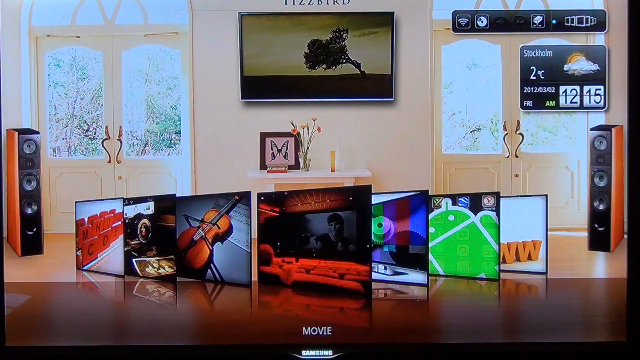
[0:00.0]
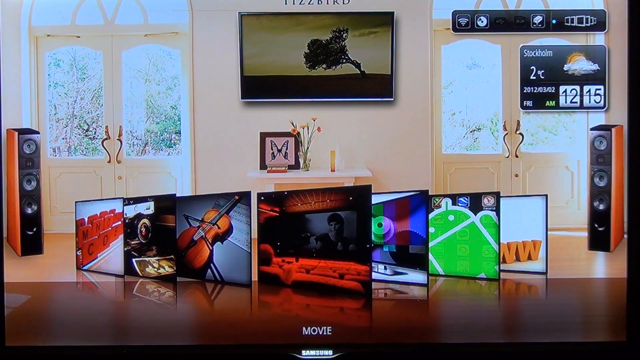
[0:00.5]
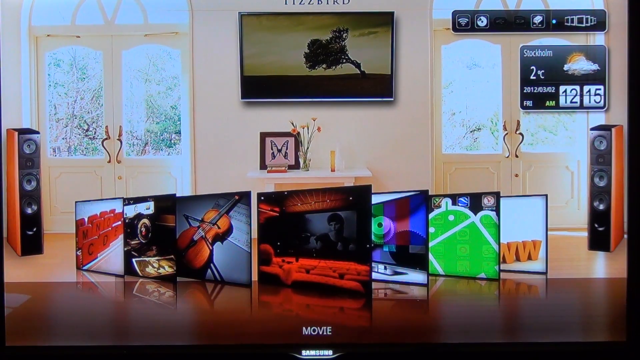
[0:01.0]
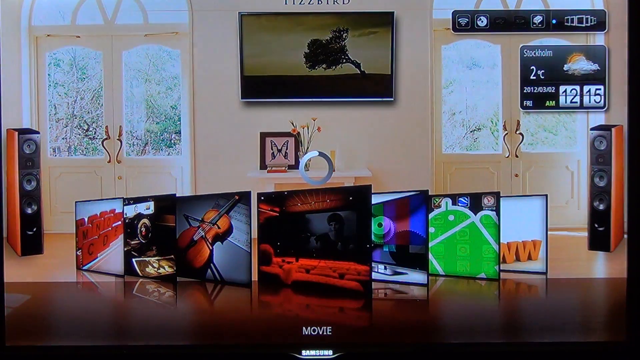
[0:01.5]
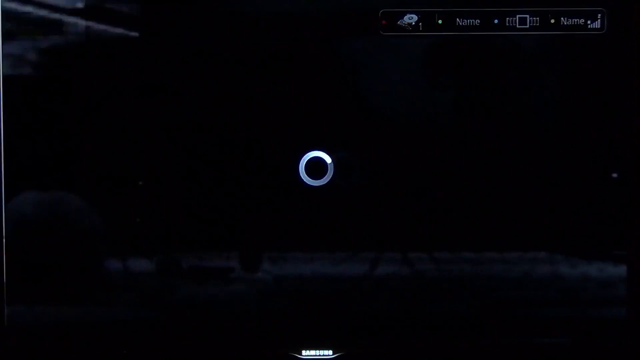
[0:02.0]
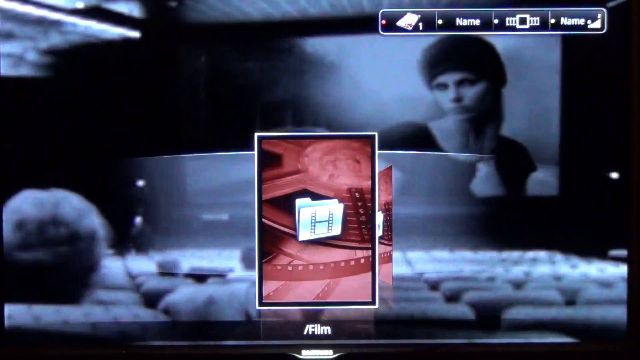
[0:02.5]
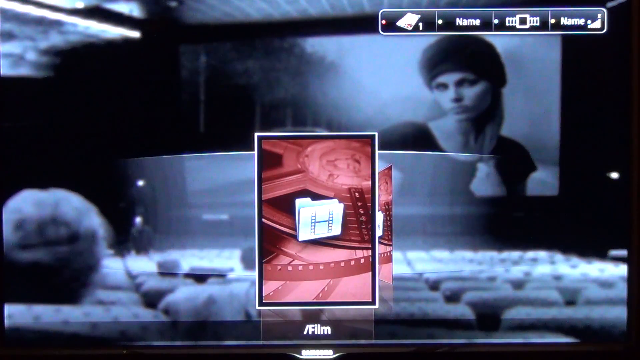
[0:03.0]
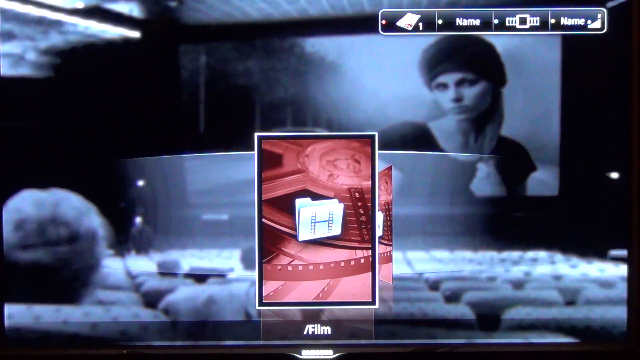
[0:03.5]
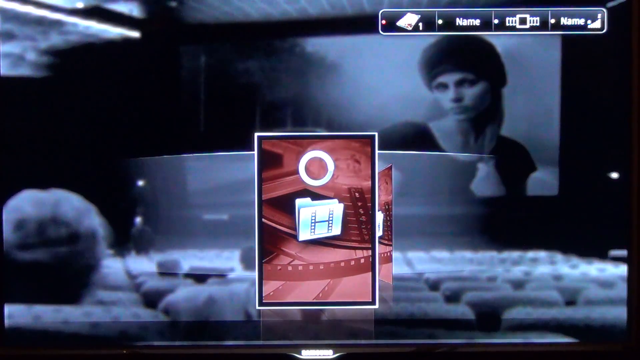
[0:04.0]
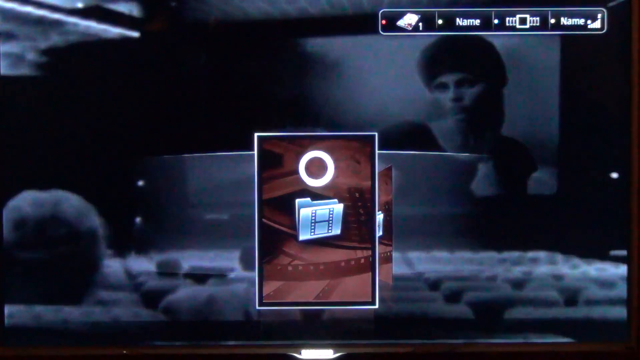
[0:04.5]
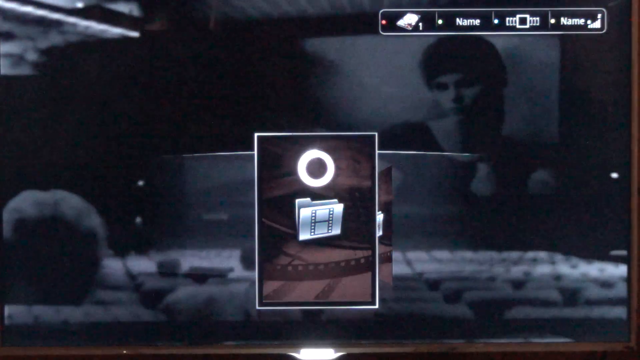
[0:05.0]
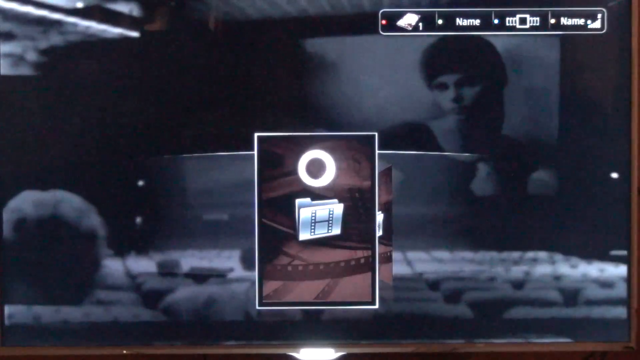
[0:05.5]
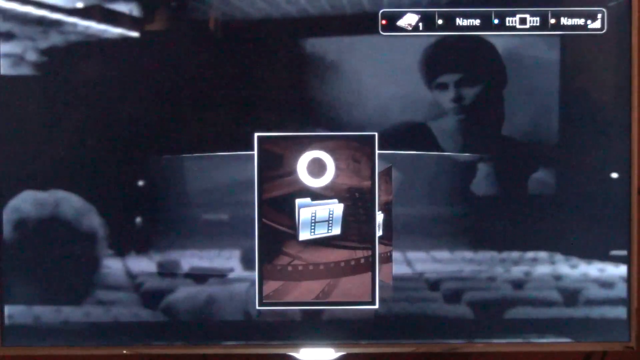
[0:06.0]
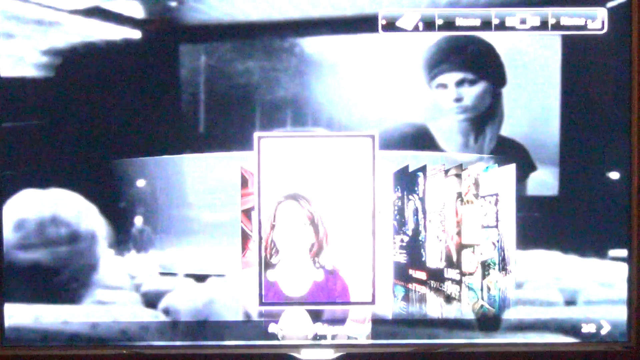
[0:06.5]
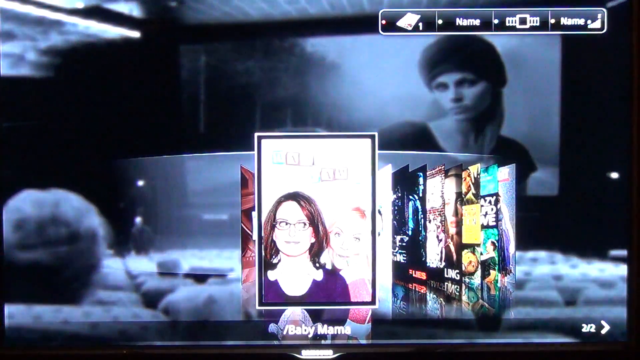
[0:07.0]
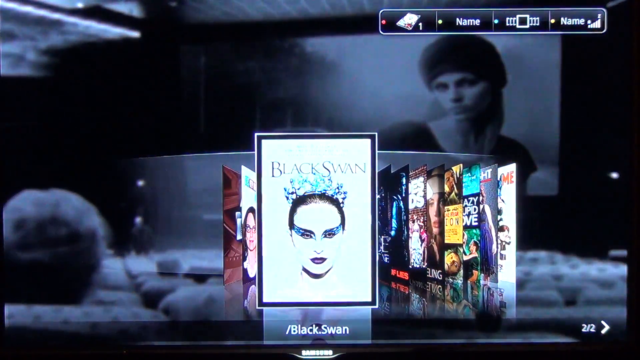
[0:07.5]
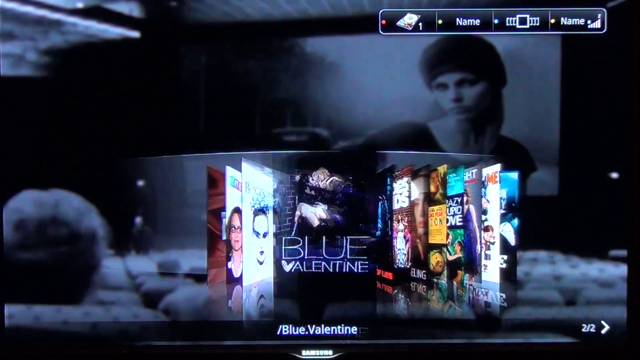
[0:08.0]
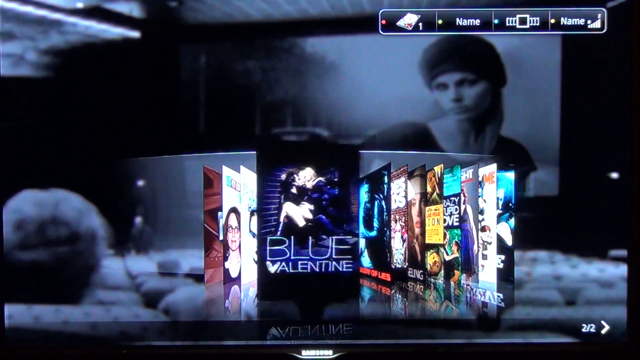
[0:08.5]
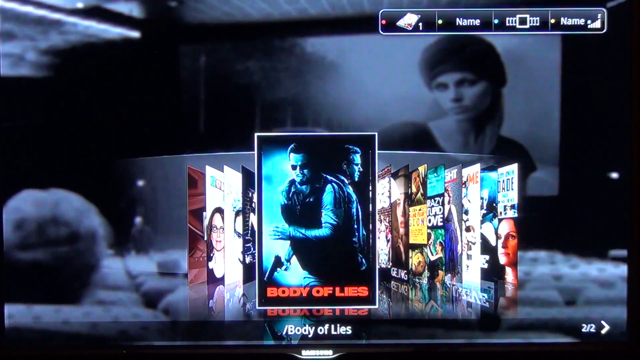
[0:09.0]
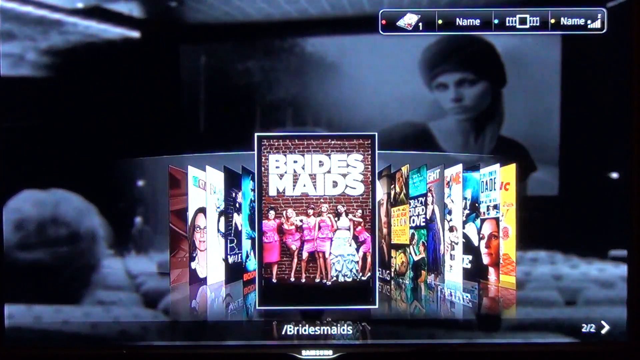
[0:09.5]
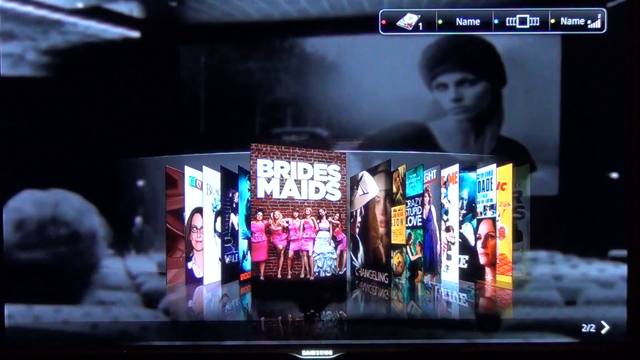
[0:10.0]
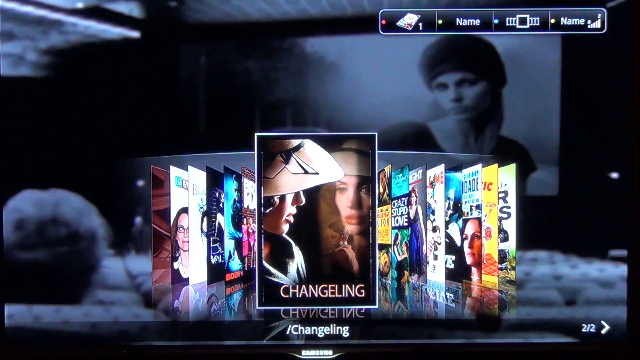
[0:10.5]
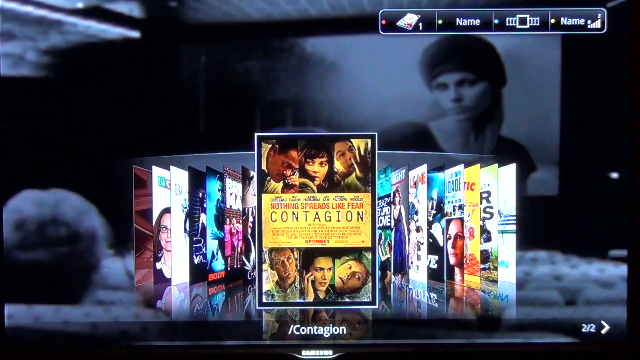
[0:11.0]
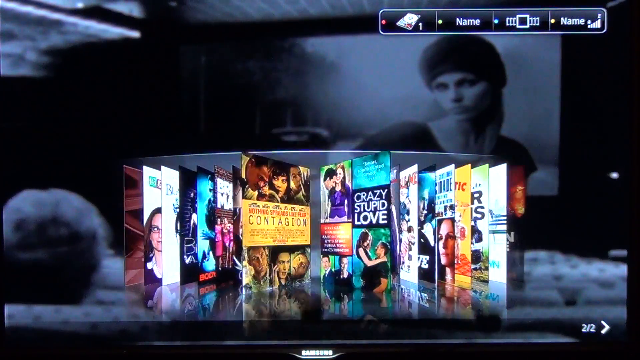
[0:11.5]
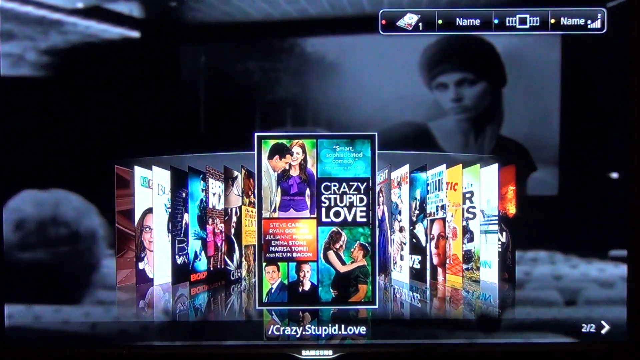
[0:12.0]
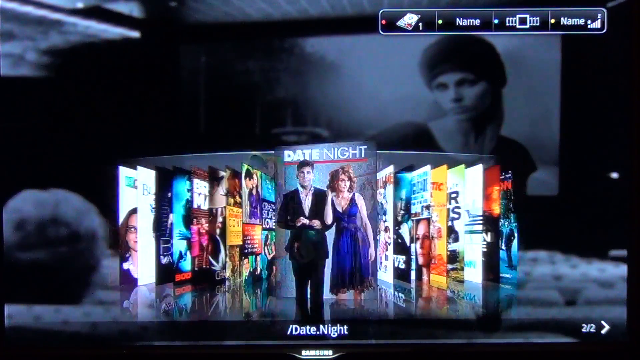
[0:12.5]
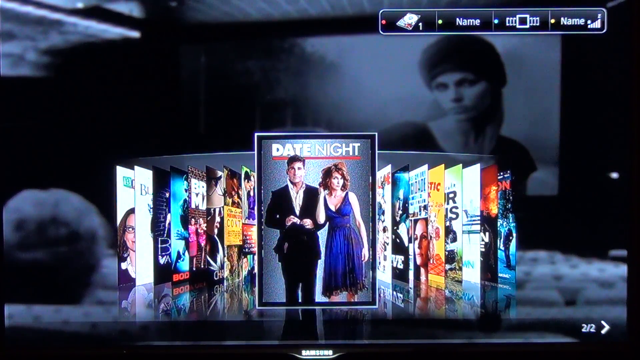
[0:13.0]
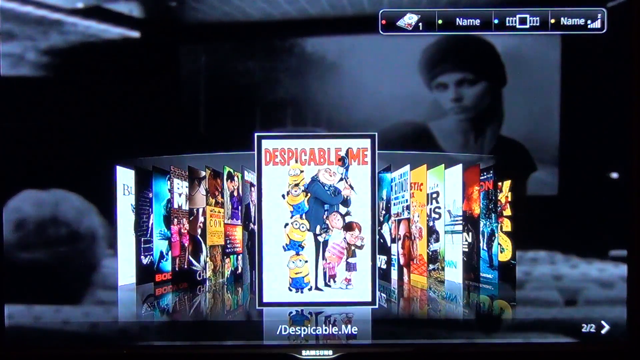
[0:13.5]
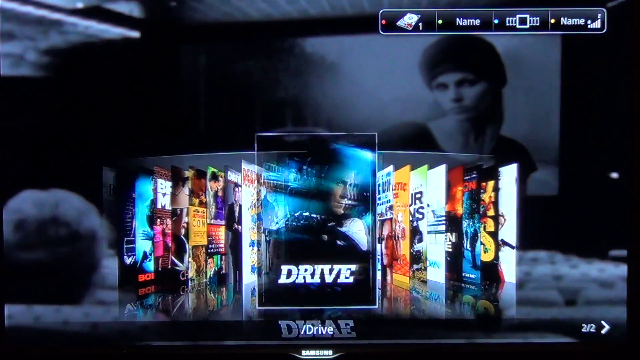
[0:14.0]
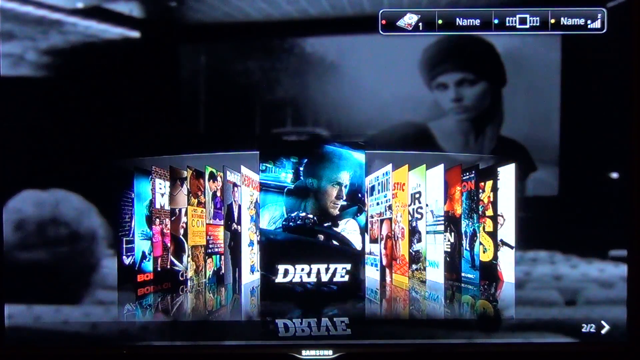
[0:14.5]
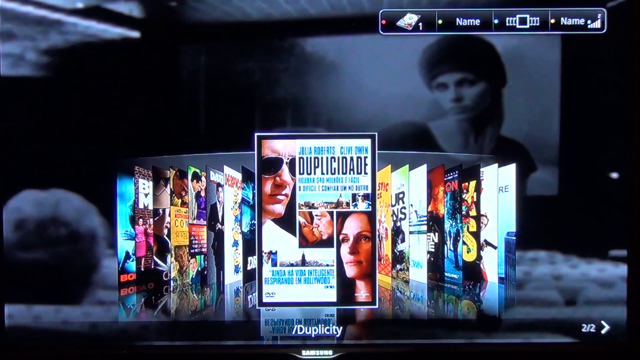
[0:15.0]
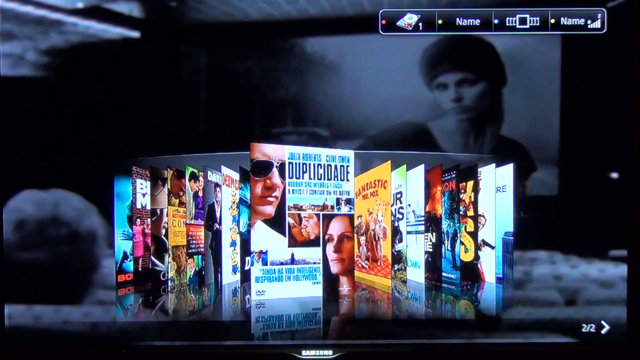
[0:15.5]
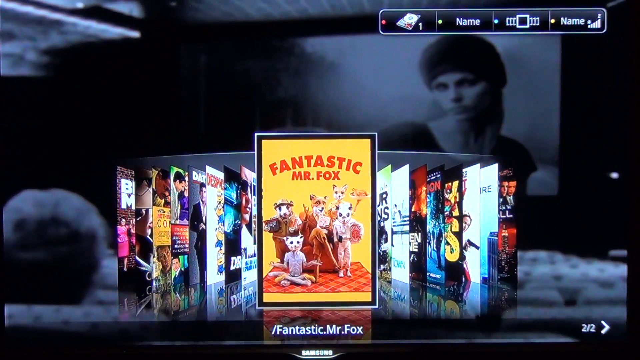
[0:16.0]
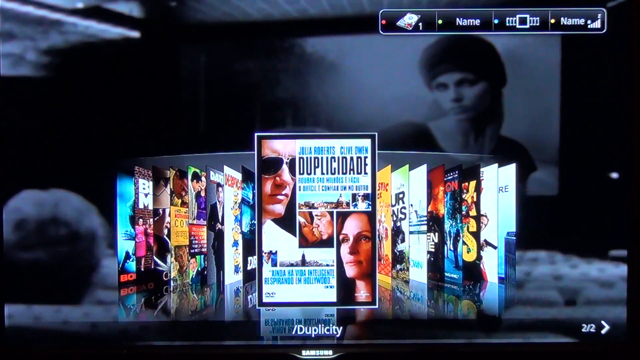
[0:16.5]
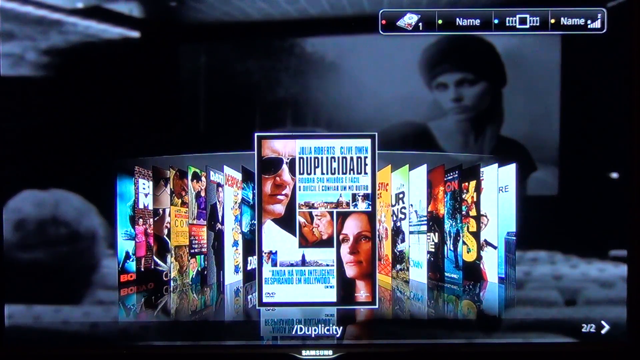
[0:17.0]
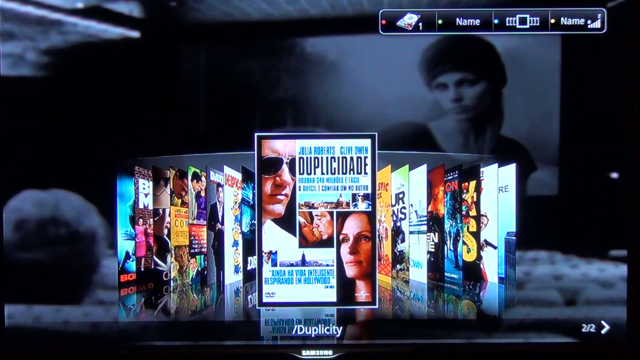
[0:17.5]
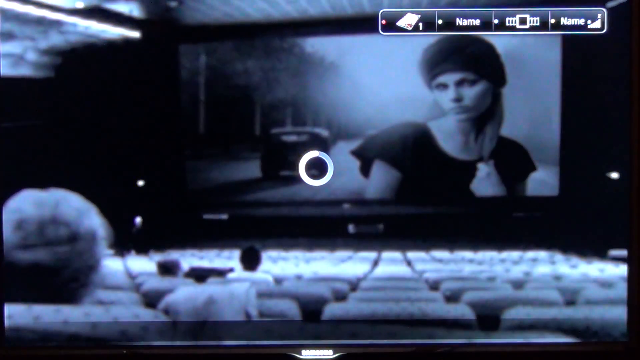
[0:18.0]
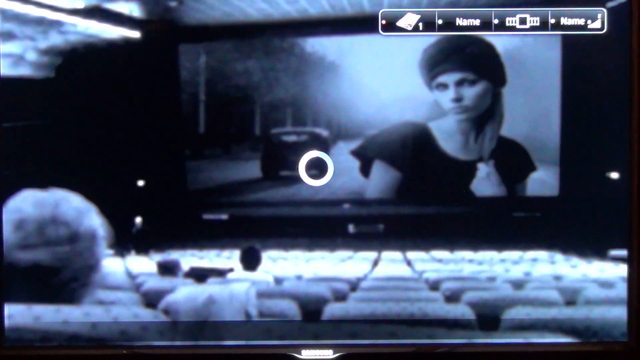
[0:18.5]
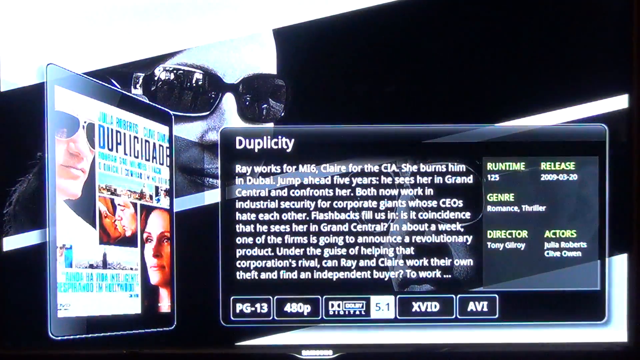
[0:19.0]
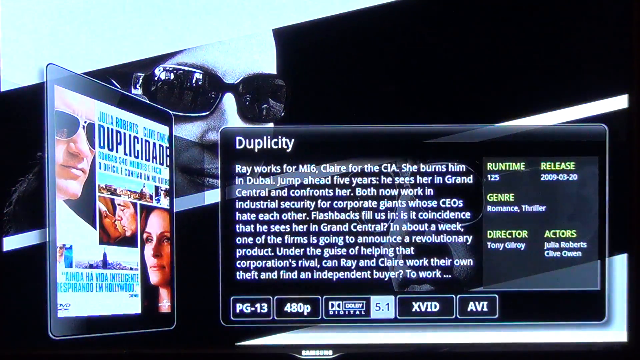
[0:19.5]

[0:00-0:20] What seems to be the interface of a DVD player or some sort of media player, maybe from the early 2000s, is on screen. The person navigates through the interface, first choosing movies, and then goes into the movies, which are organized alphabetically. They go through A and B, and at C they find a movie they want: Duplicate. Among the movies they go past are Changeling, Contagion, Crazy Stupid Love, Despicable Me and Drive. They select Duplicate, with Julia Roberts, to watch it. The interface looks very 2000s or 90s and old-fashioned, with a background of a house and a weather snippet somewhere toward the top. It is a digital interface rather than a real setting. While they go through the menu, there is a picture of a woman in the background, possibly part of the theme, and a cinema background. It looks like a DVD menu from the 2000s.